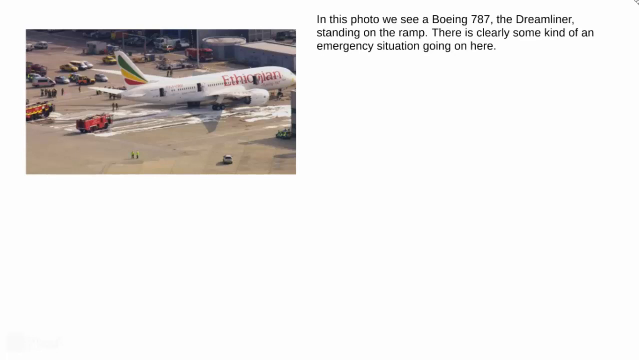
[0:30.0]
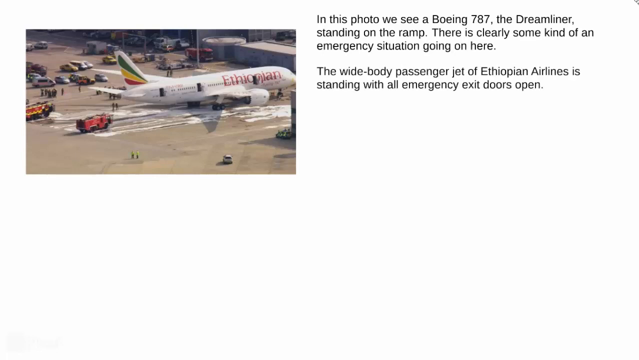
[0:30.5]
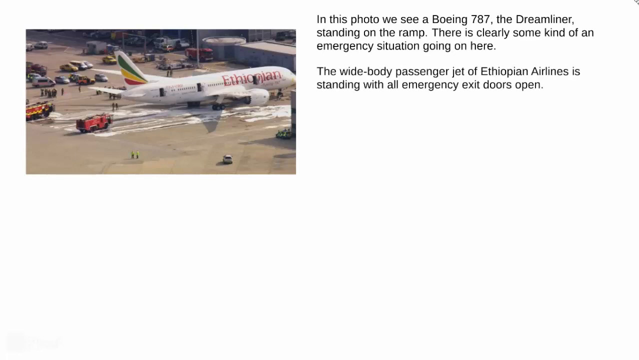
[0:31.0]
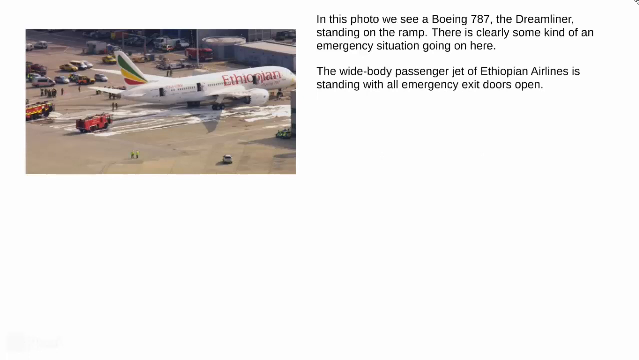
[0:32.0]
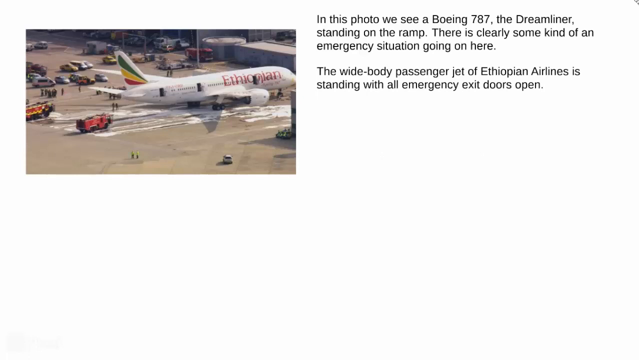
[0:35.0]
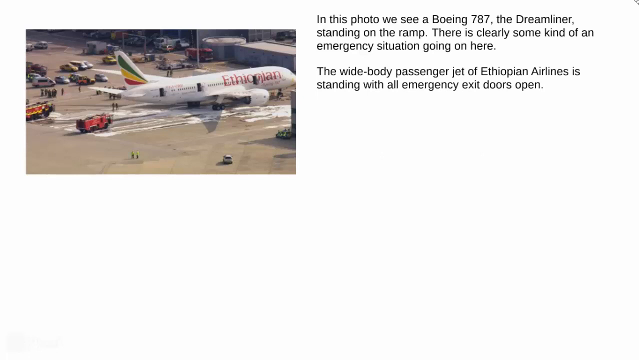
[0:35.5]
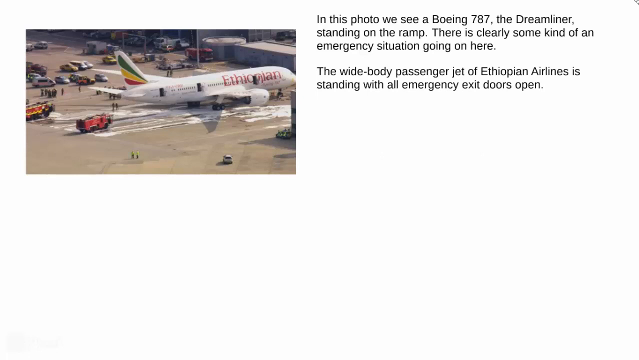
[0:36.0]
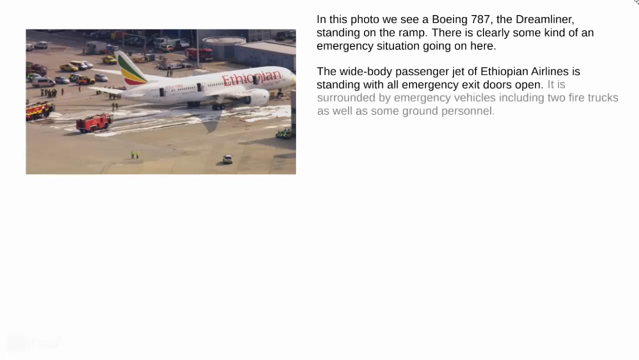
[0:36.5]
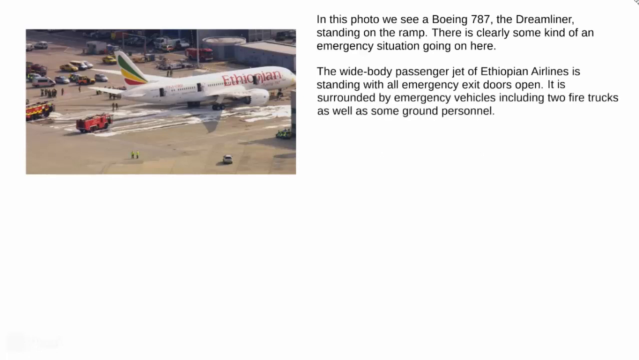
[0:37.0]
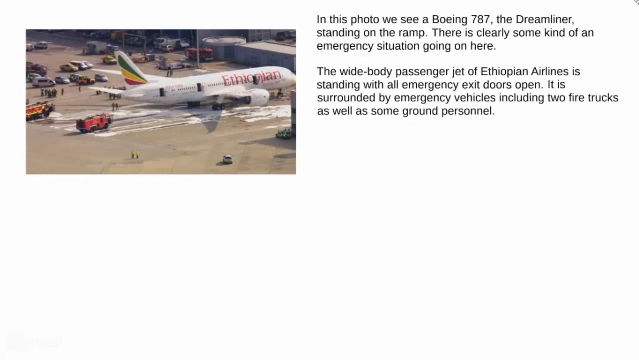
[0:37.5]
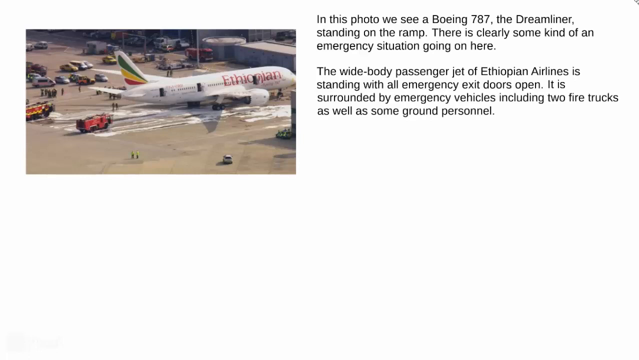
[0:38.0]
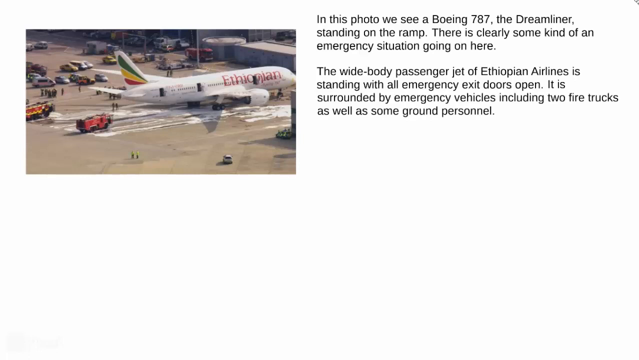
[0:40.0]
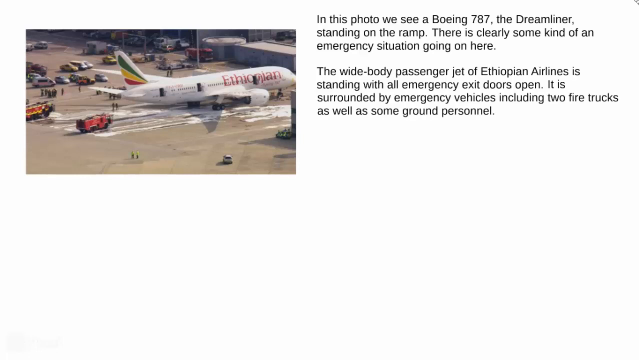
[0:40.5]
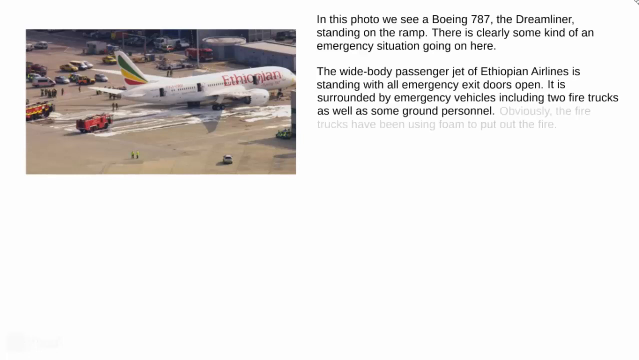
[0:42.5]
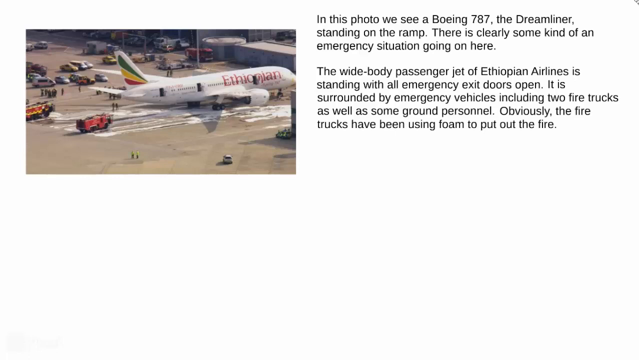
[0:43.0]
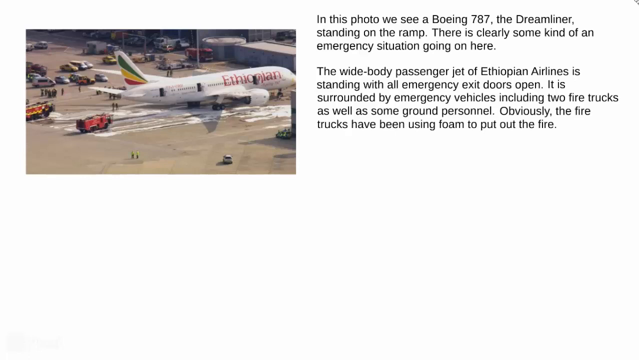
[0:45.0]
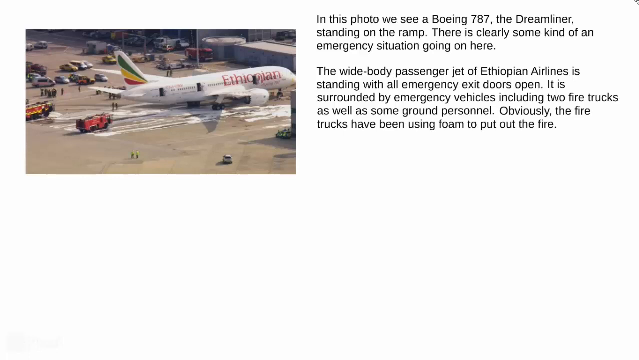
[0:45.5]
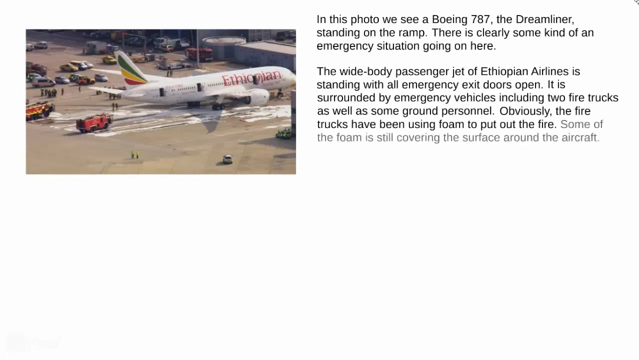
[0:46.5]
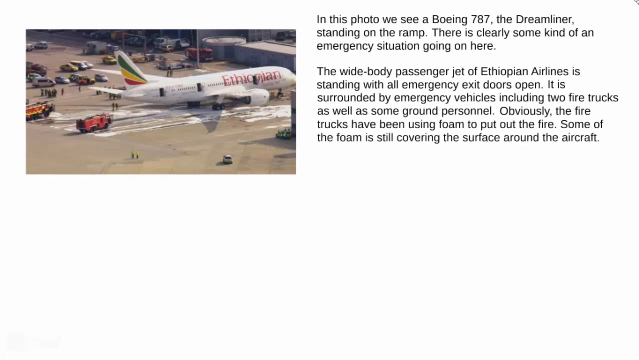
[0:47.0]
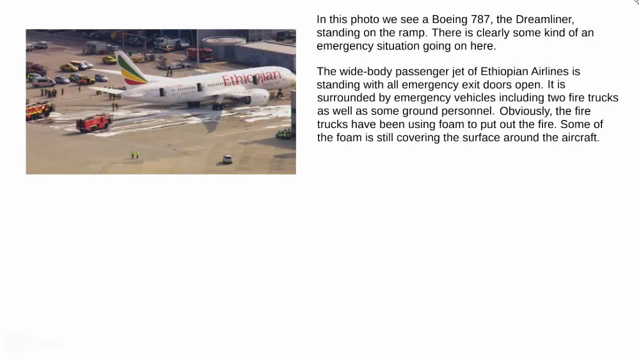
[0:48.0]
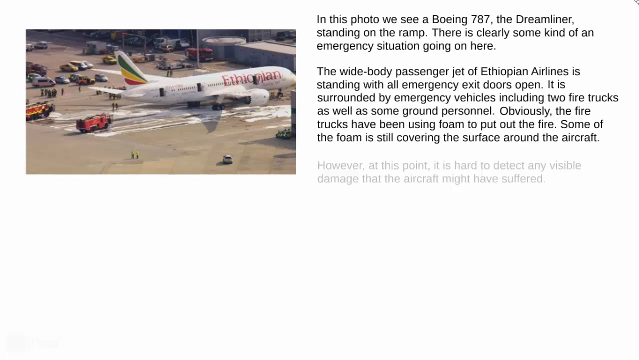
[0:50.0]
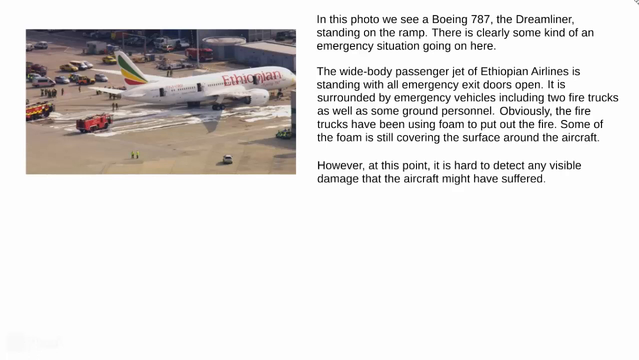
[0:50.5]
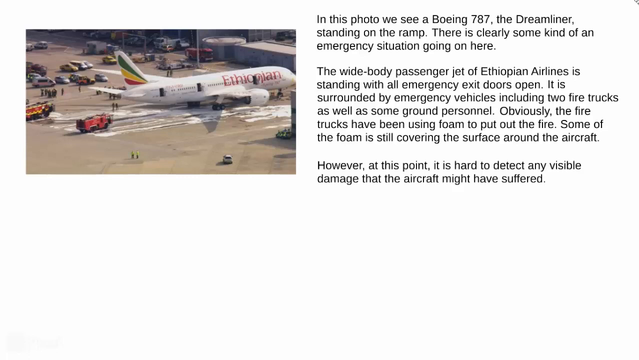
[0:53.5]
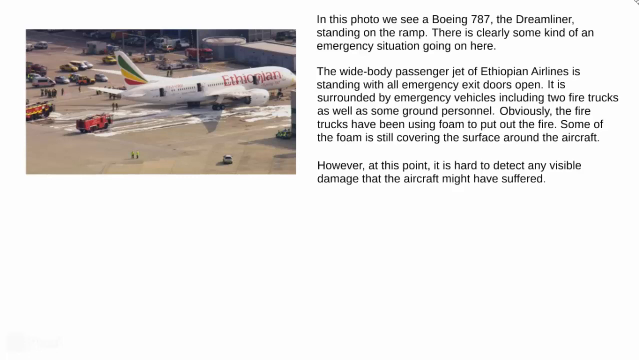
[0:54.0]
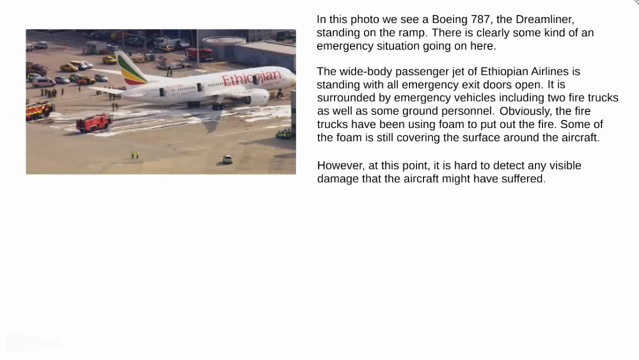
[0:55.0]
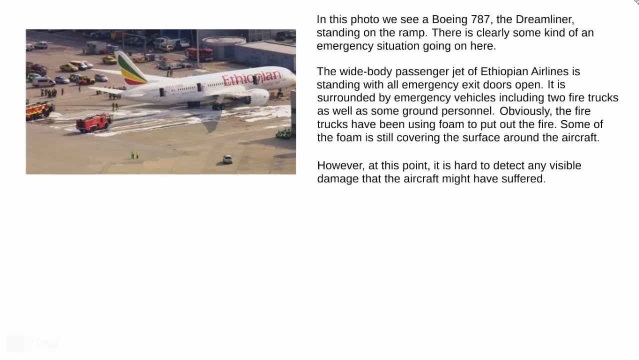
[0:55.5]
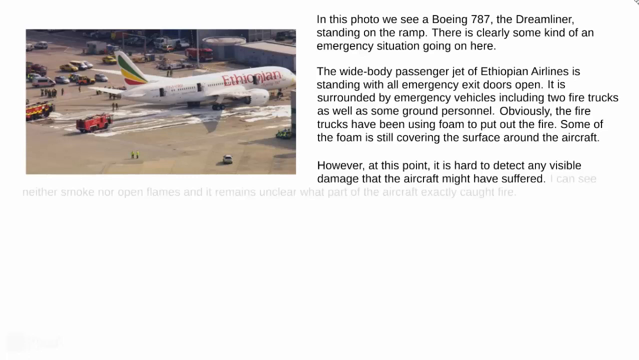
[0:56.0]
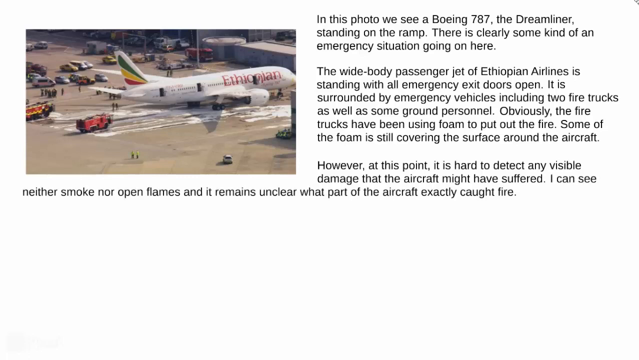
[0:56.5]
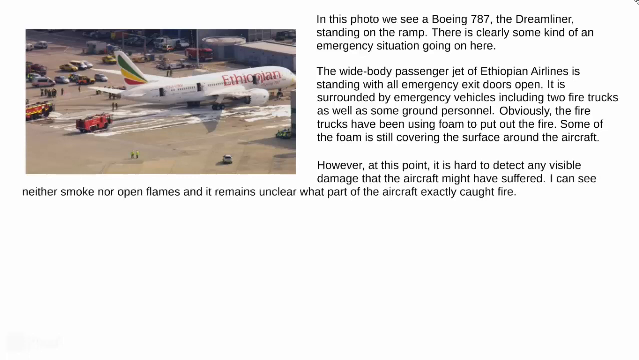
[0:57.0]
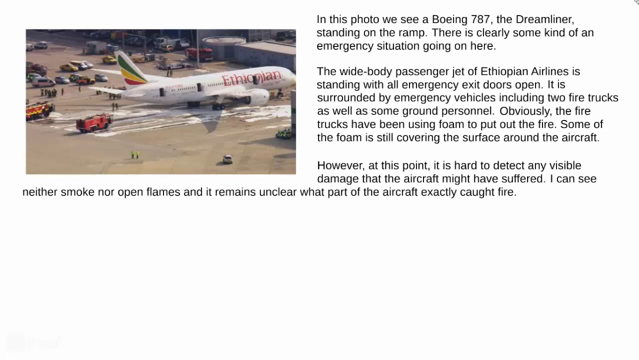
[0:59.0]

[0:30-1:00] The same picture of the airplane labeled "Ethiopian" on its side continues. On the right side, black words begin to pop up, reading: "In this photo we see a Boeing 787, the Dreamliner standing on the ramp. There's clearly some kind of an emergency situation going on here. The wide body passenger jet of Ethiopian Airlines is standing with all the emergency exit doors open. It is surrounded by emergency vehicles, including two fire trucks, as well as some ground personnel. Obviously the fire trucks have been using foam to put out the fire. Some of the foam is still covering the surface around the aircraft." The picture was taken outdoors, with a good amount of natural light making everything clear and visible. The video is rectangular.